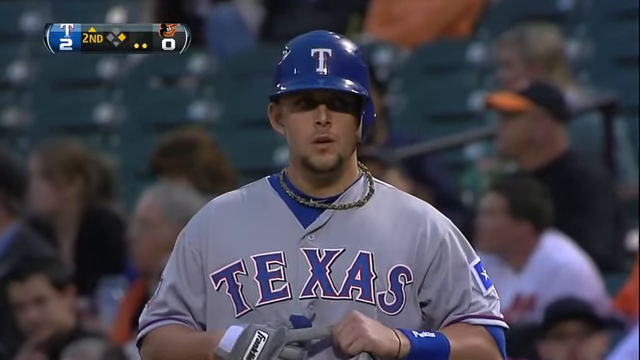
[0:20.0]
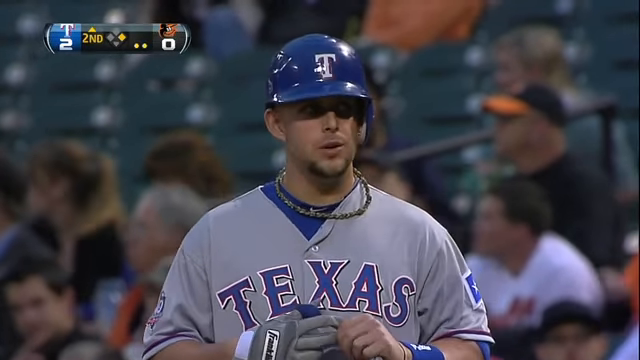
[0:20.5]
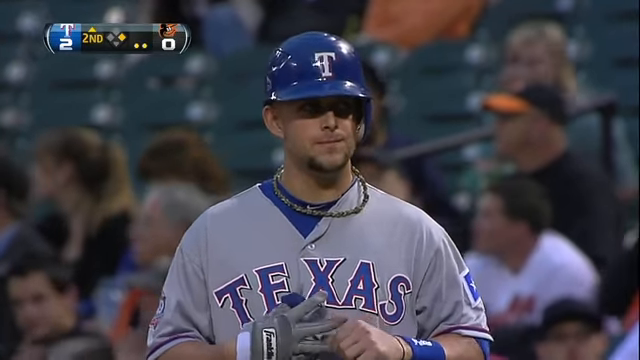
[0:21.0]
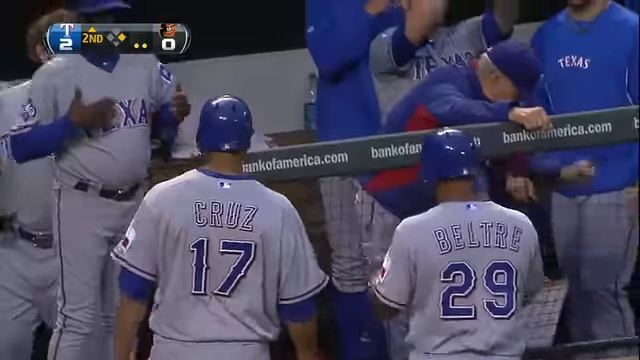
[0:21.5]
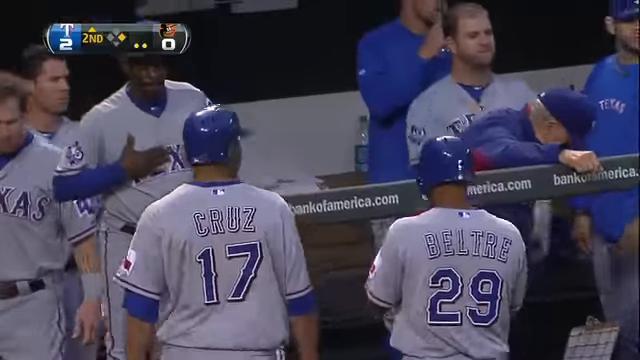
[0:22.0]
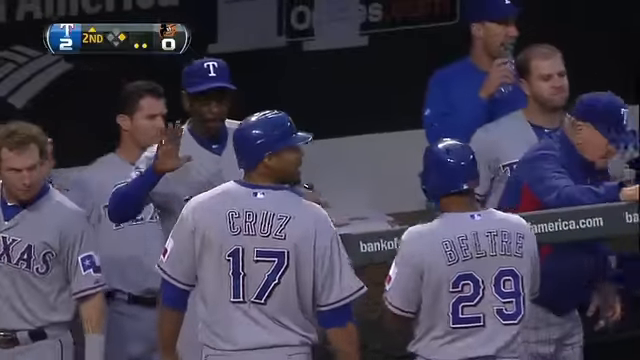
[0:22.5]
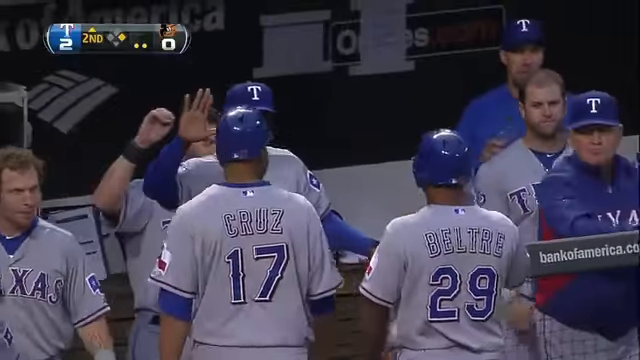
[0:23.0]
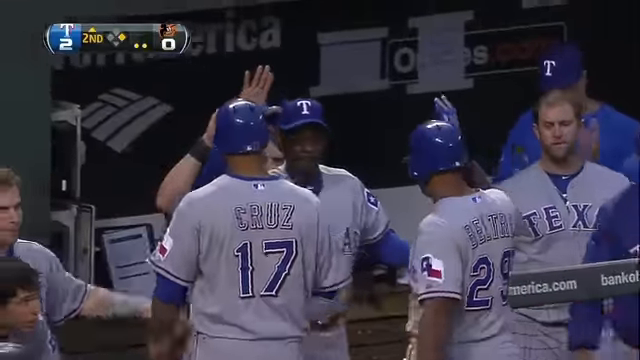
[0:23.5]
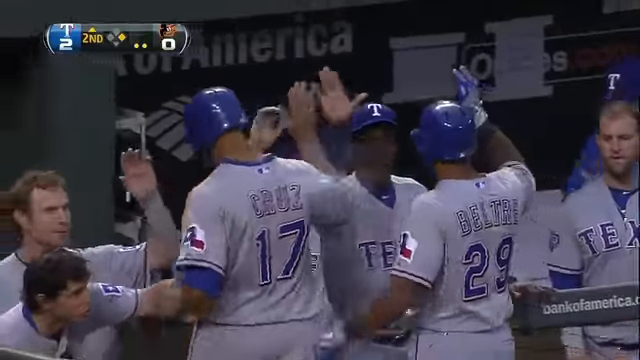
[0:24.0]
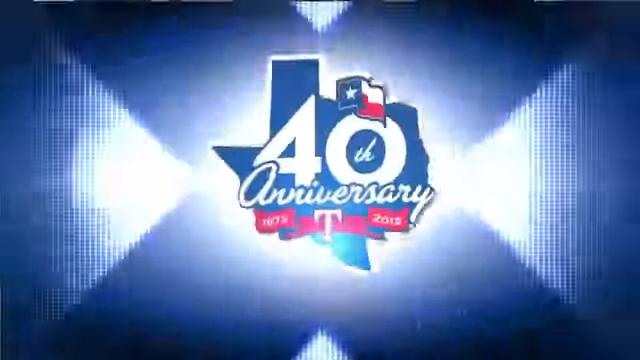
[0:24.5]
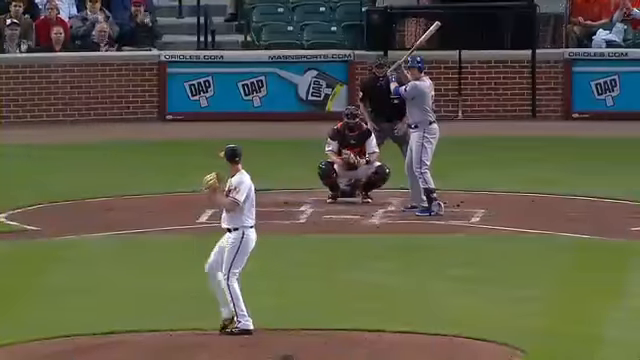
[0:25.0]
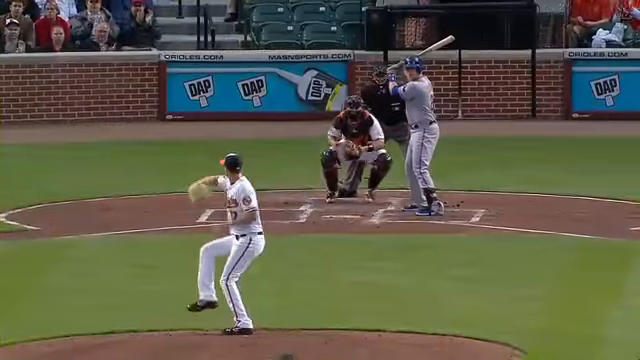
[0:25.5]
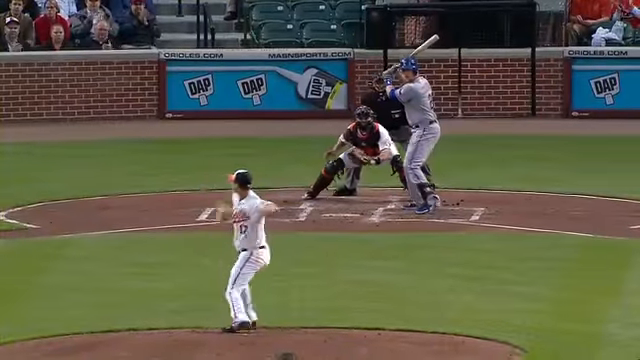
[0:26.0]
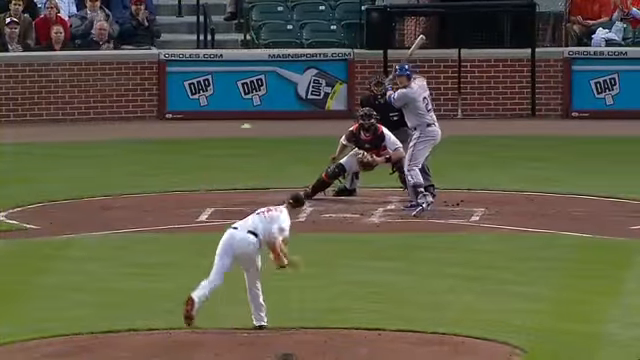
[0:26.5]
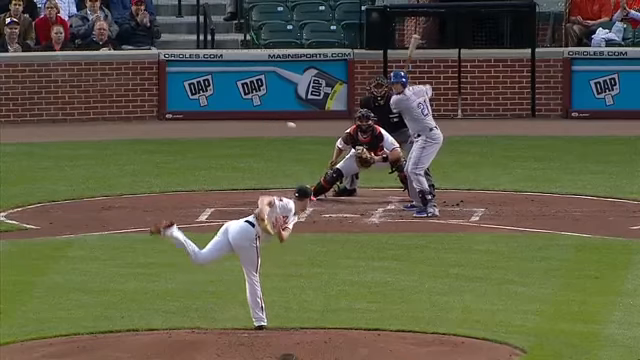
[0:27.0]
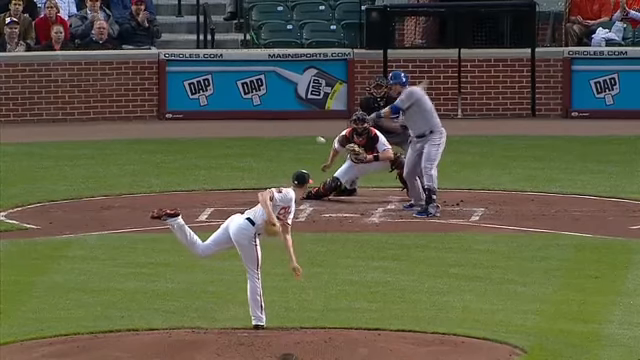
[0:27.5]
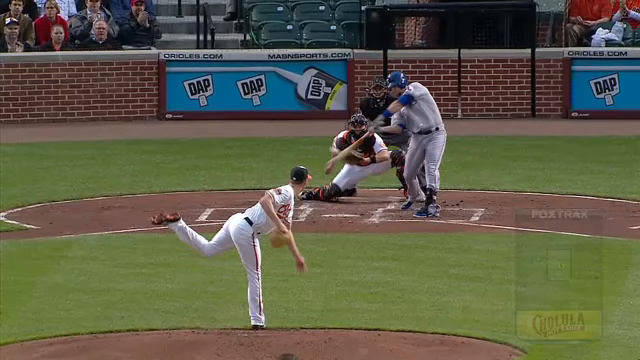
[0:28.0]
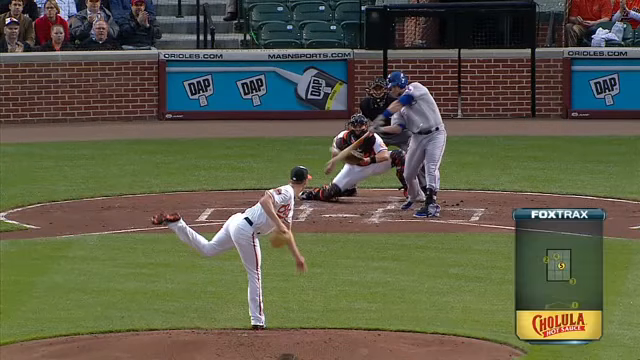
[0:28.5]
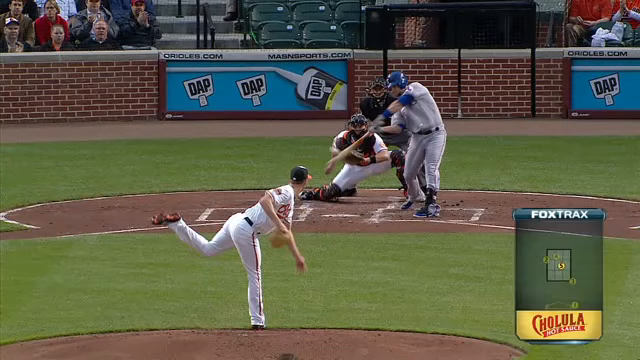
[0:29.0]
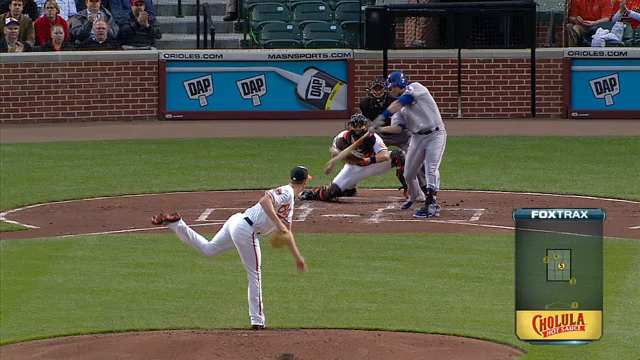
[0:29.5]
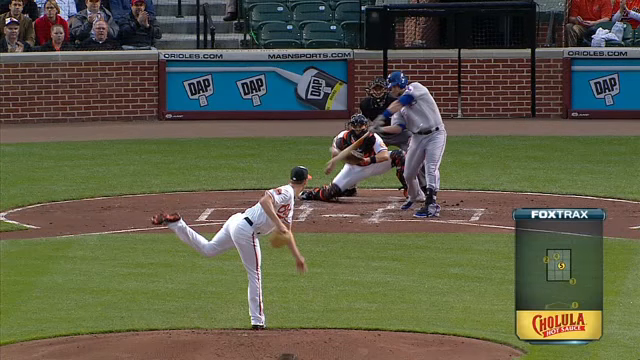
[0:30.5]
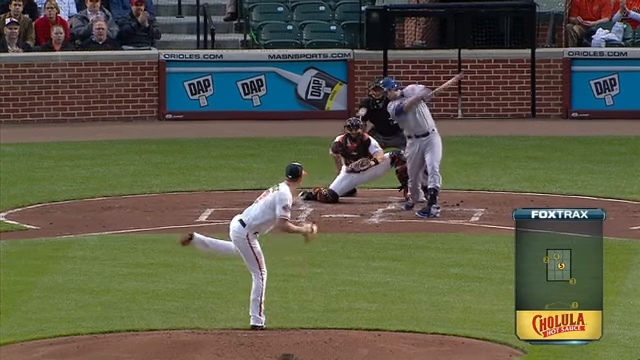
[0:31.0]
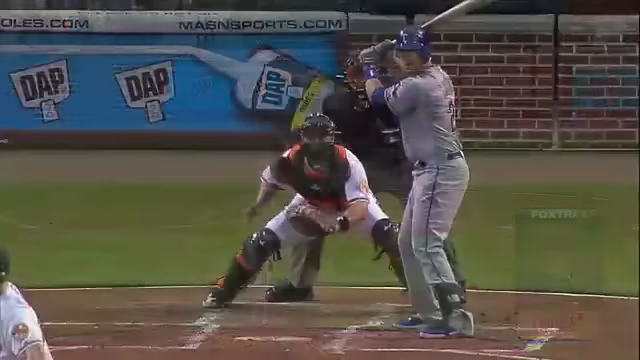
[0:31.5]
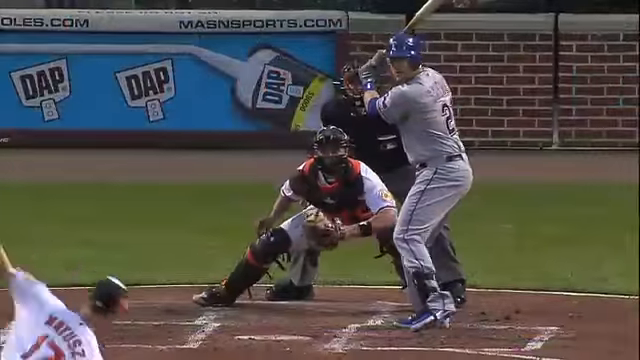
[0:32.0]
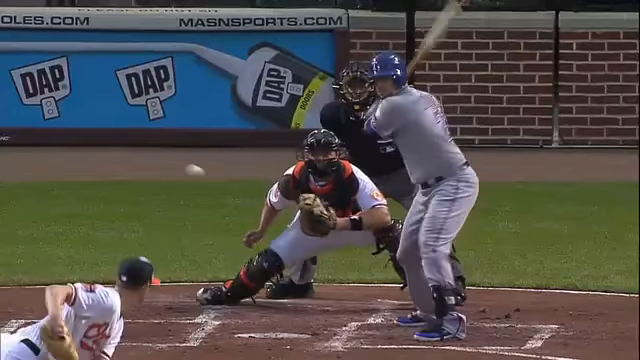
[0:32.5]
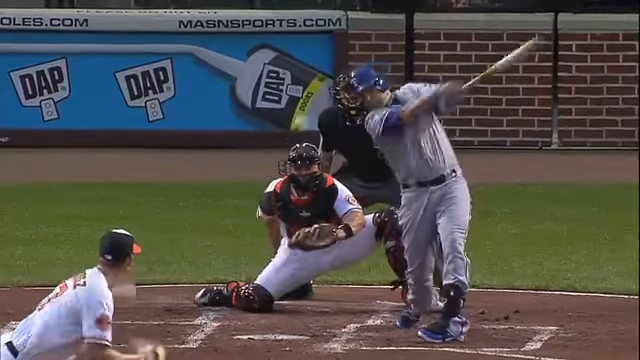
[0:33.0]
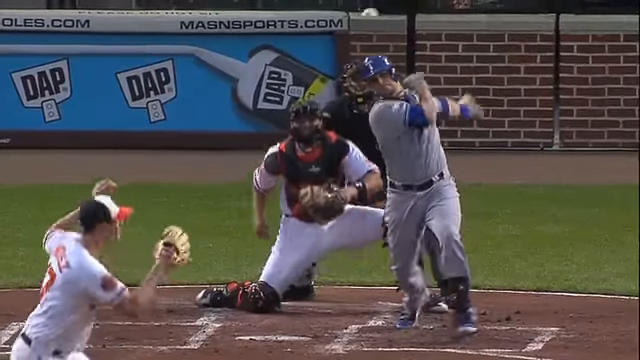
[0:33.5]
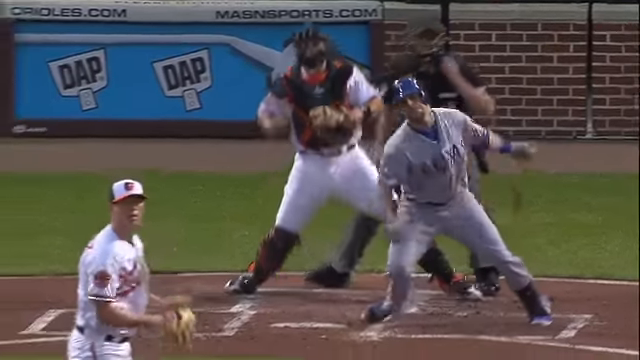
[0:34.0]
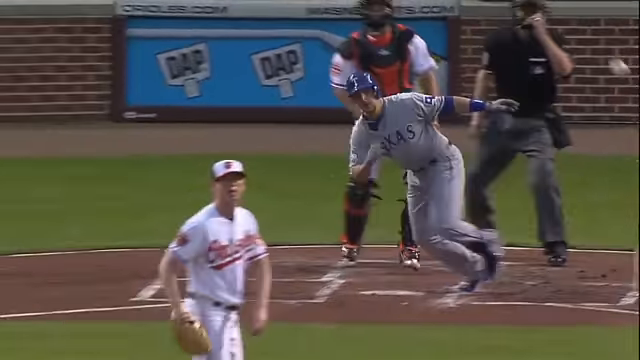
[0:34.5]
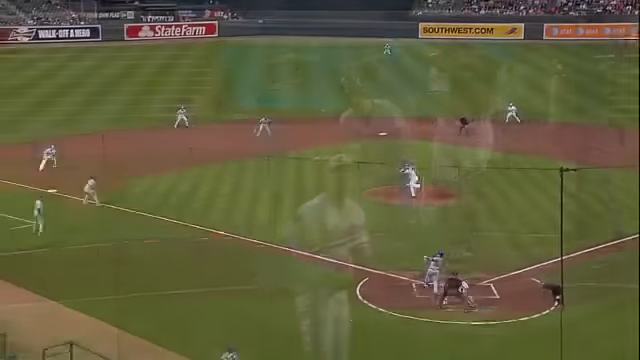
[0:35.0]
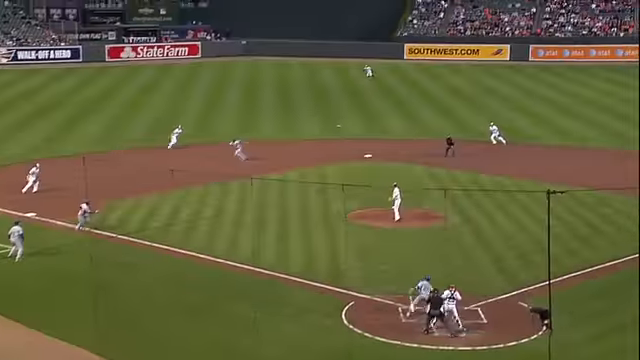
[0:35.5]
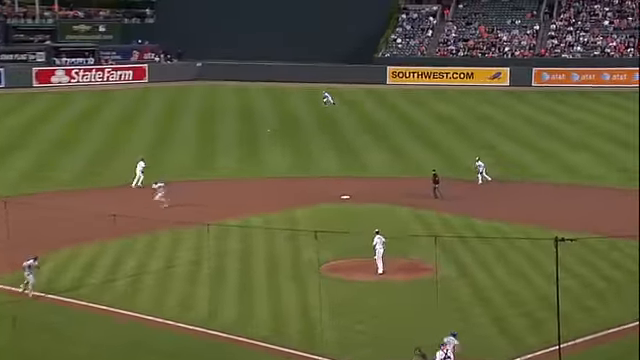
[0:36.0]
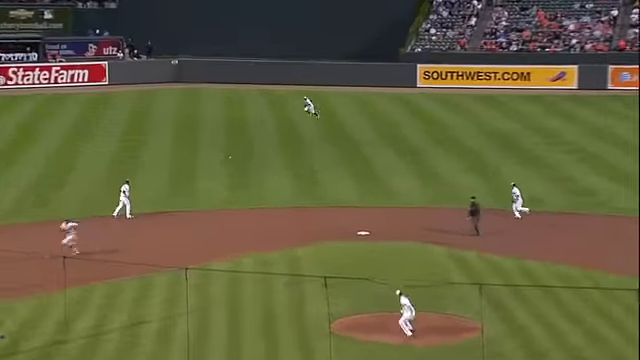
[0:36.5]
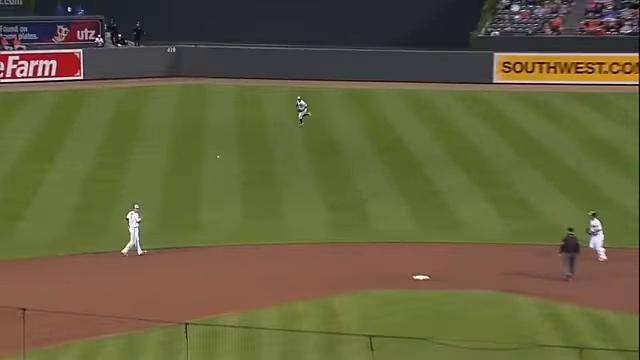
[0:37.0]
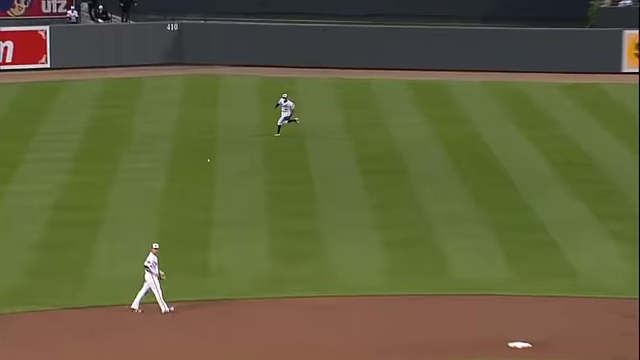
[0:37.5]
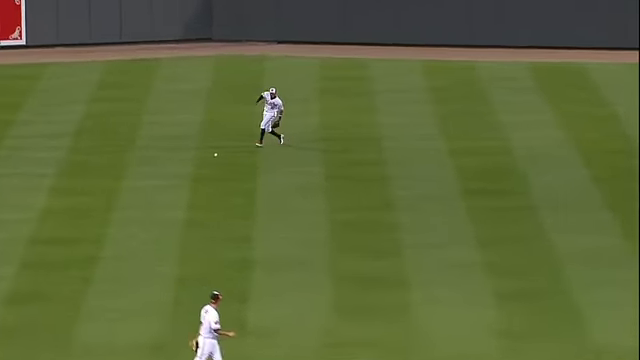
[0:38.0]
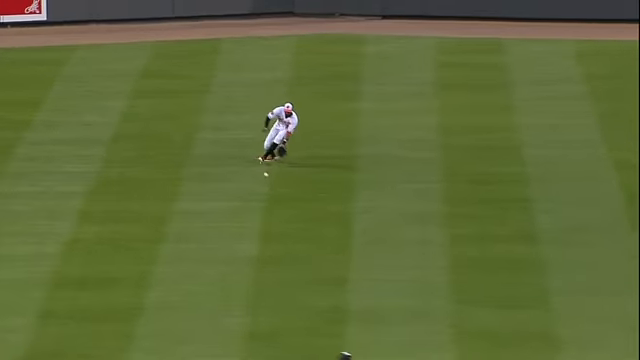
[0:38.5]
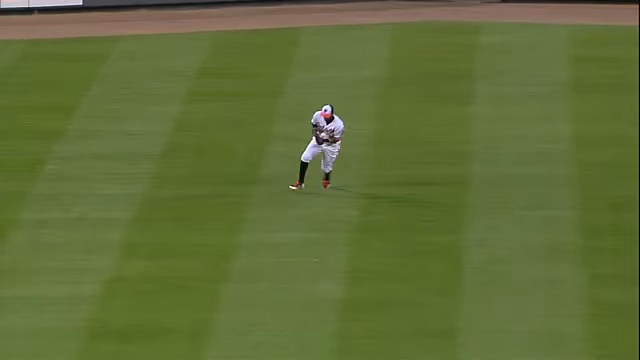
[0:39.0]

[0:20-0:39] The single into the outfield actually scores two runs. The two players who score are Cruz, number 17, and Beltre, number 29. They head to the Texas Rangers dugout, where teammates, coaches and managers give them high fives. The highlight of the play is then shown again: the Baltimore Orioles pitcher, a left-hander with his mitt on his right hand, winds up and throws the baseball toward home plate. The player at home plate swings the bat with great velocity, connects, and the ball goes flying straight out into center field. The Orioles center fielder runs over, snags the white baseball with the mitt on his left hand, and tosses it to the infield with his right hand. Then the players in the Texas Rangers dugout are shown celebrating.